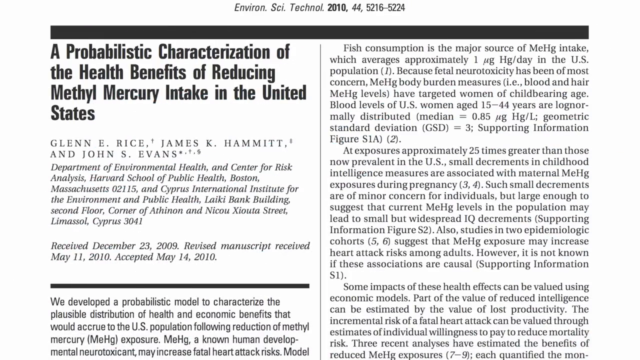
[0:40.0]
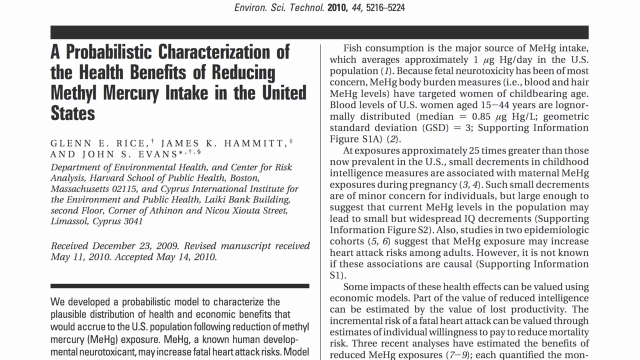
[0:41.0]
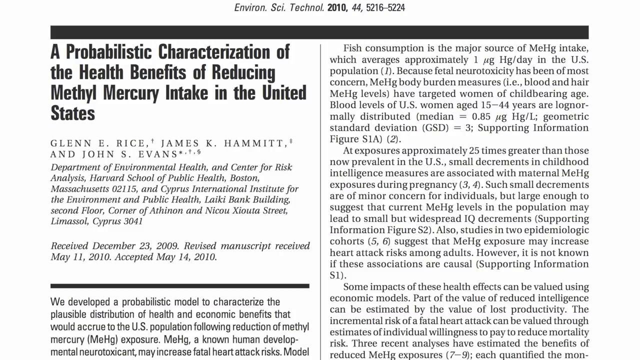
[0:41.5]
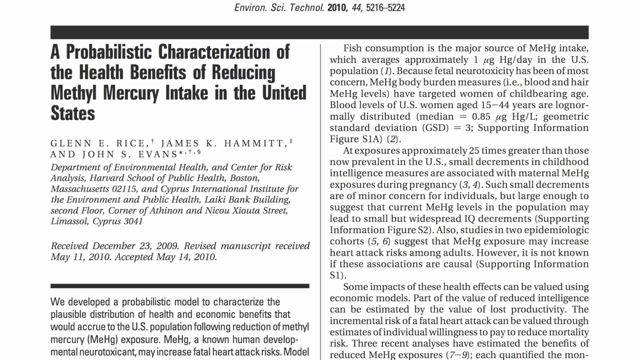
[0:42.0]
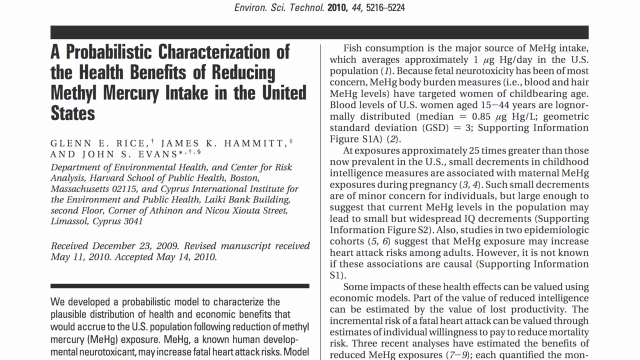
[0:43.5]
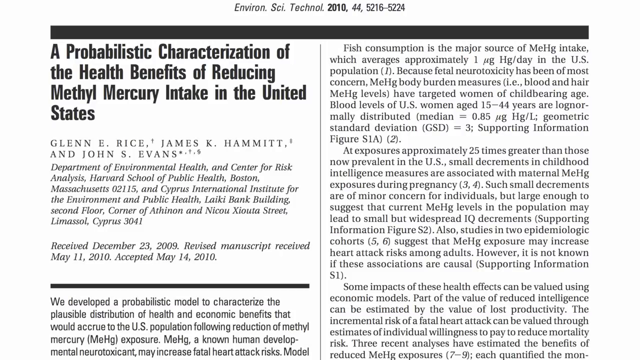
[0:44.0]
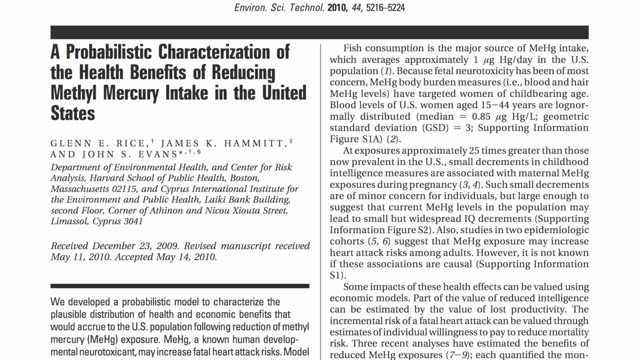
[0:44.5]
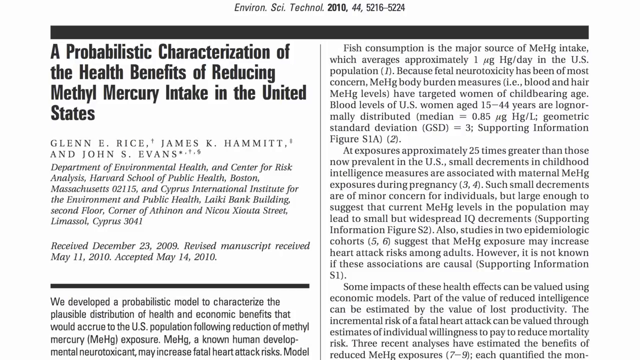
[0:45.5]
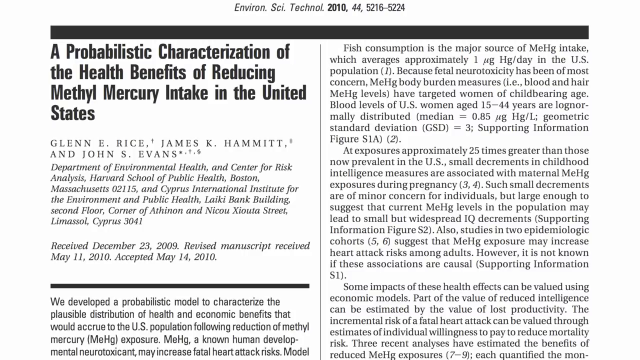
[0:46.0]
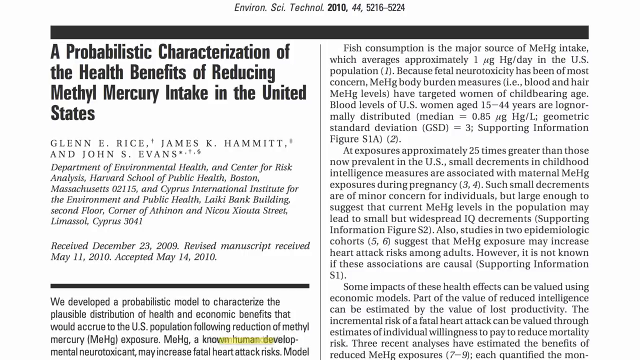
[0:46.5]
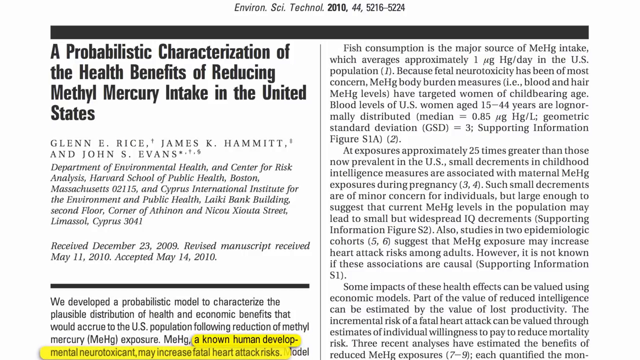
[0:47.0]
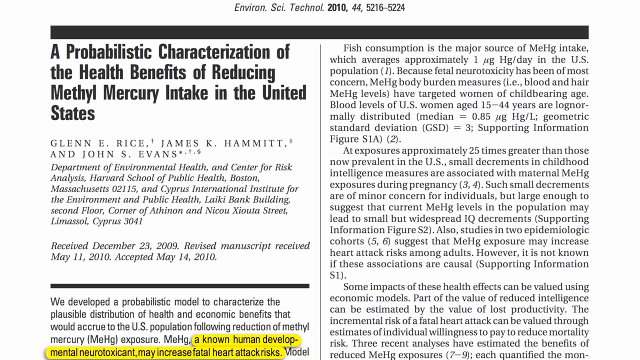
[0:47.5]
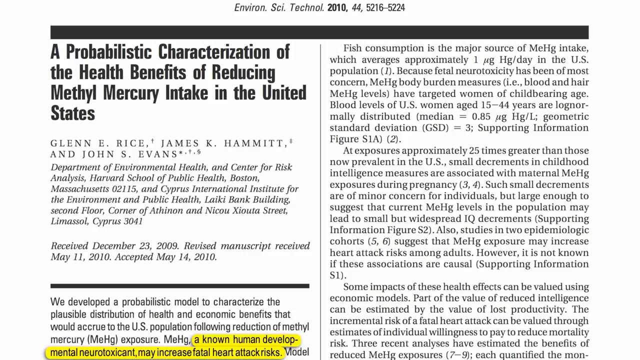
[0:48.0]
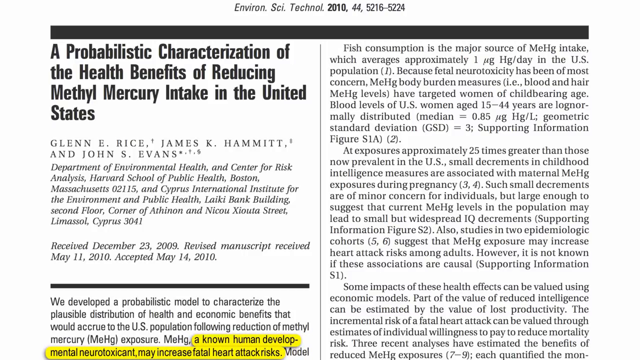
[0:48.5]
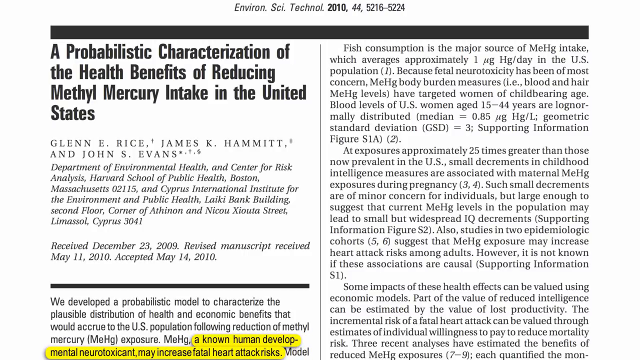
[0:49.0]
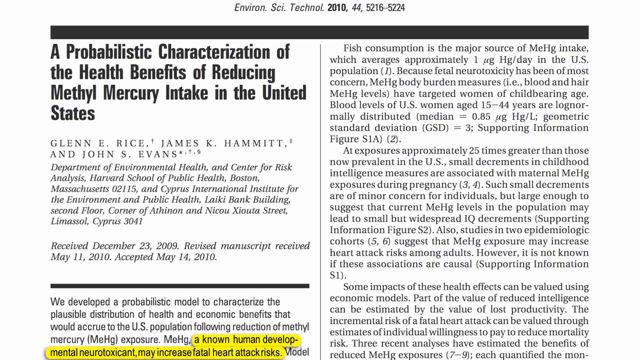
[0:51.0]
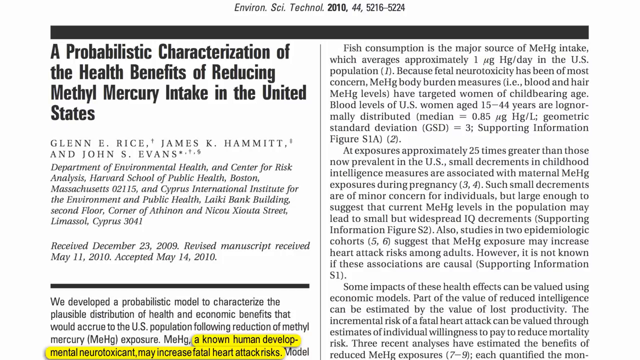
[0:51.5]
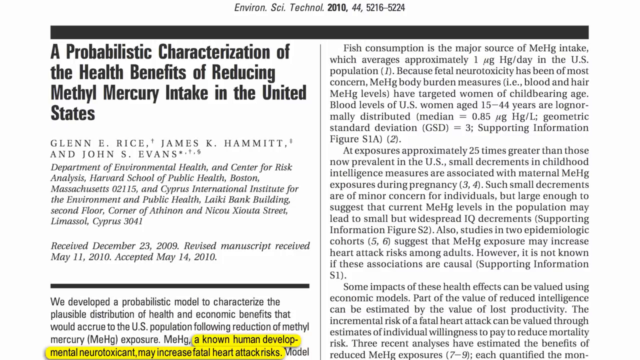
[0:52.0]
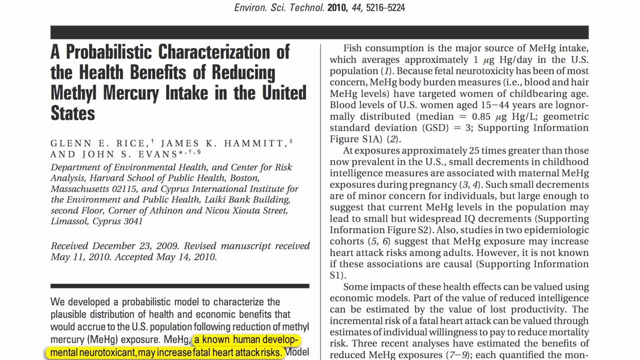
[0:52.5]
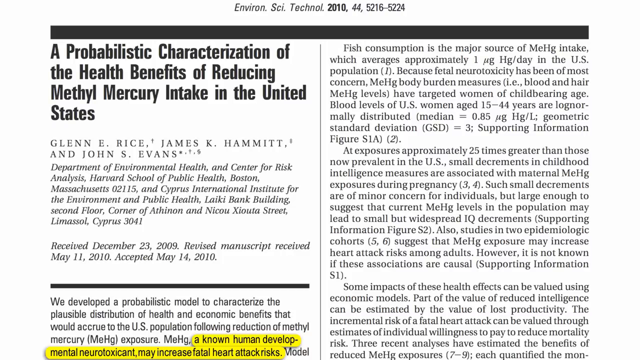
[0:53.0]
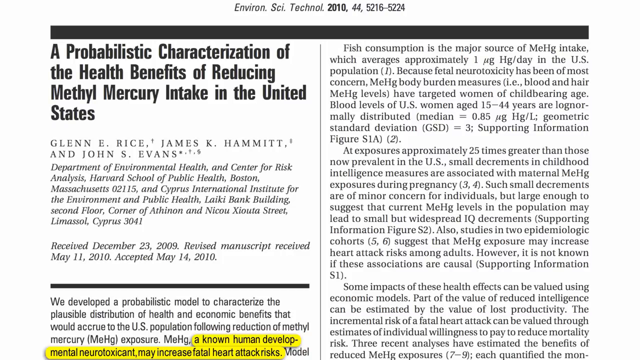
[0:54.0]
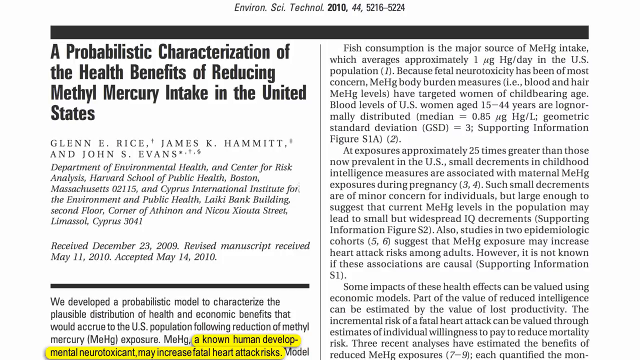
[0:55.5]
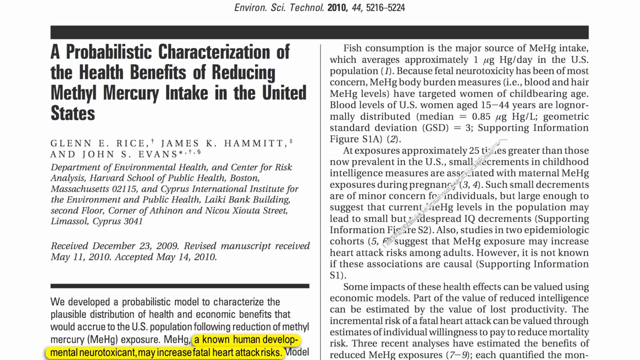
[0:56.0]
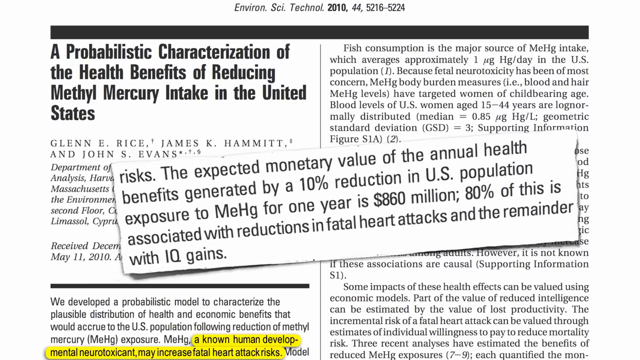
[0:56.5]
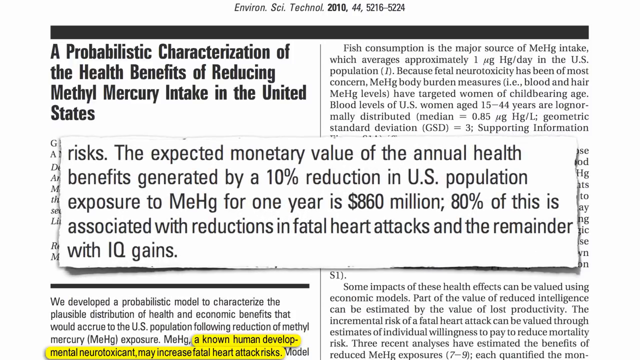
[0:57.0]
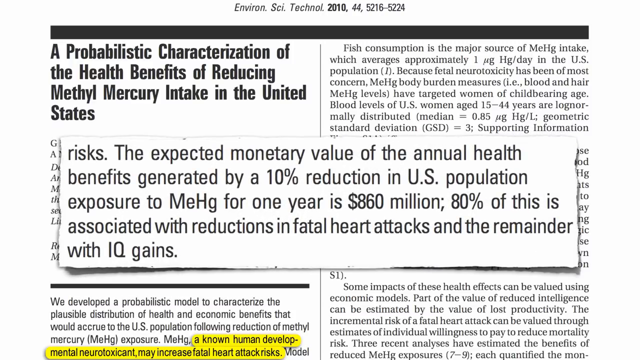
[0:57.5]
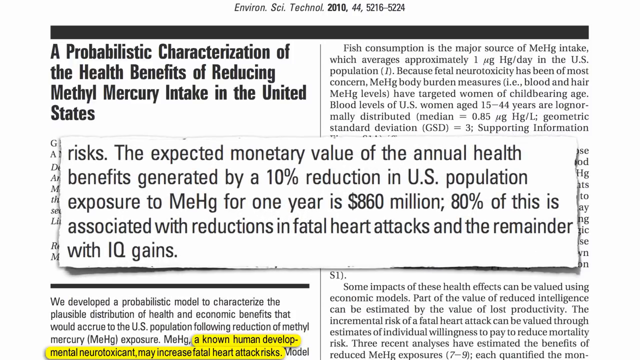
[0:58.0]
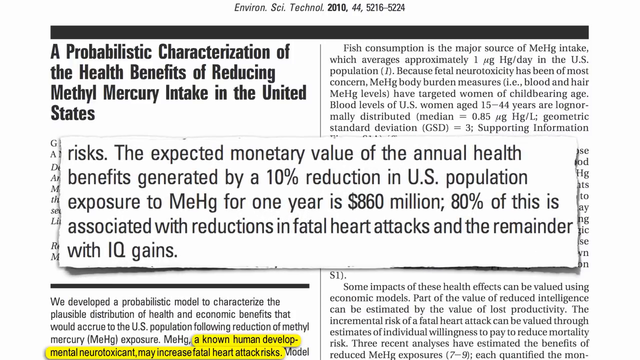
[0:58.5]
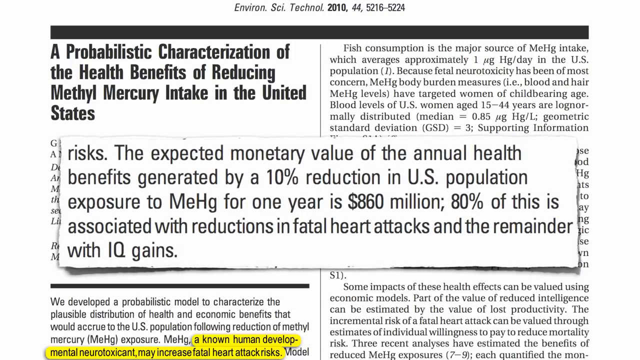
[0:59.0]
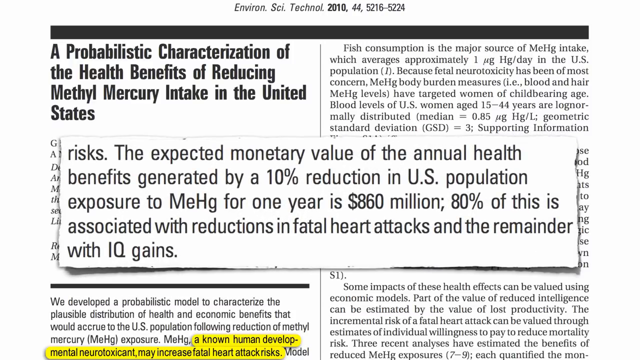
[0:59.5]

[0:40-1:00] Black text on a white background shows the title "a probabilistic characterization of the health benefits of reducing methylmercury intake in the United States," with an article of several paragraphs beginning underneath it. A text box appears in the center of the screen reading "the expected monetary value of the annual benefits generated by 10% reduction in US population exposure to MEHG for one year is $860 million. 80% of this is associated with reductions in fatal heart attacks and the remainder with IQ gains." The screen then returns to the article. The scientific article concerns the health risk of eating tuna and the mercury contained in tuna, and it is written by three authors connected with the Department of Environmental Health and Center for Risk.